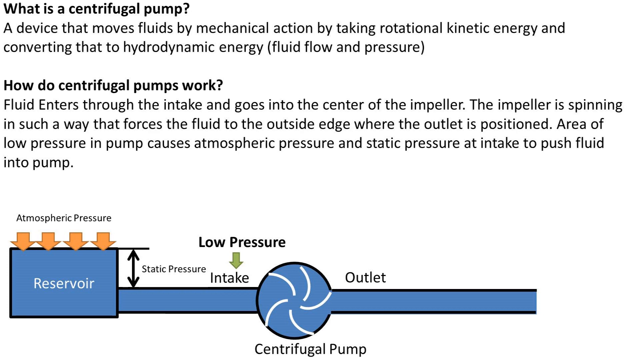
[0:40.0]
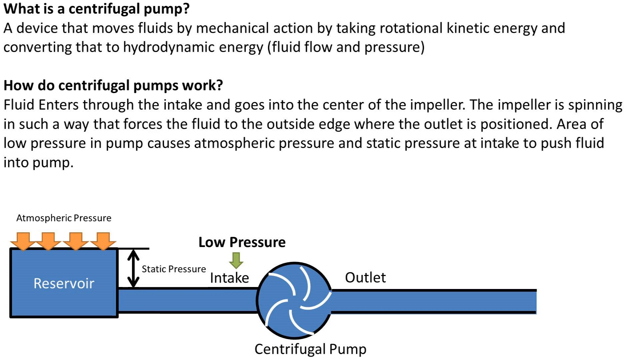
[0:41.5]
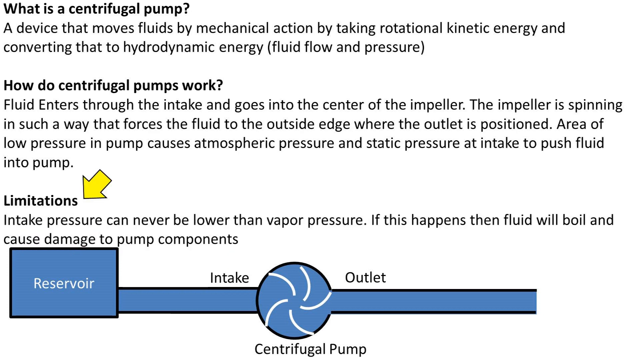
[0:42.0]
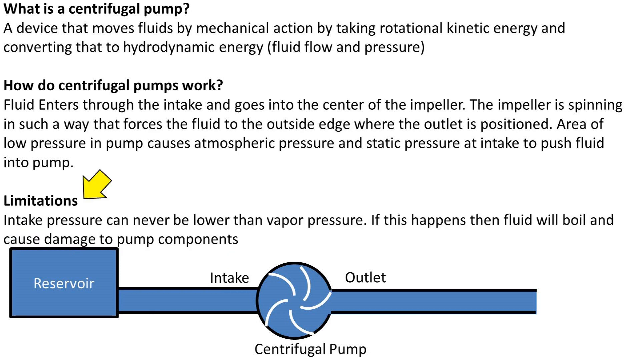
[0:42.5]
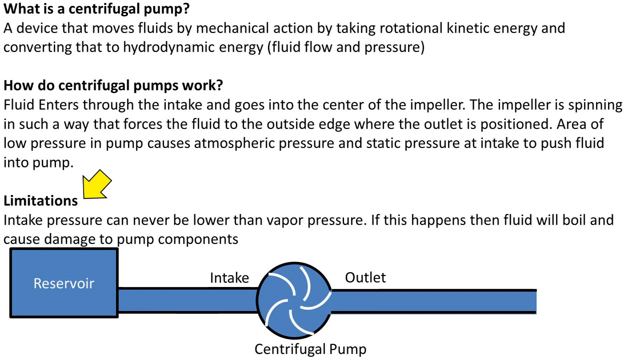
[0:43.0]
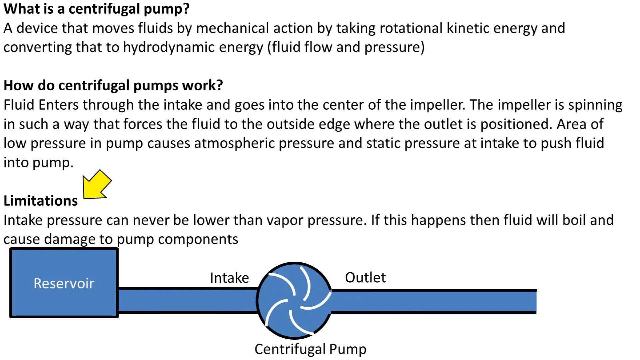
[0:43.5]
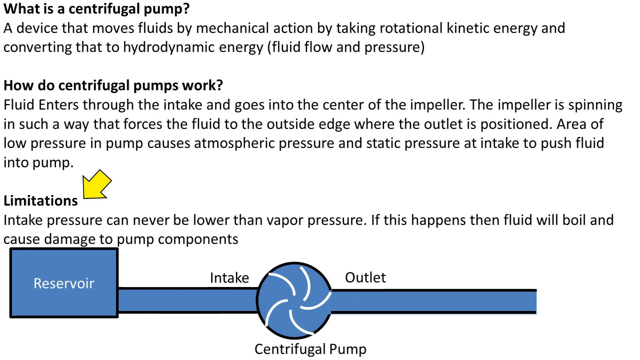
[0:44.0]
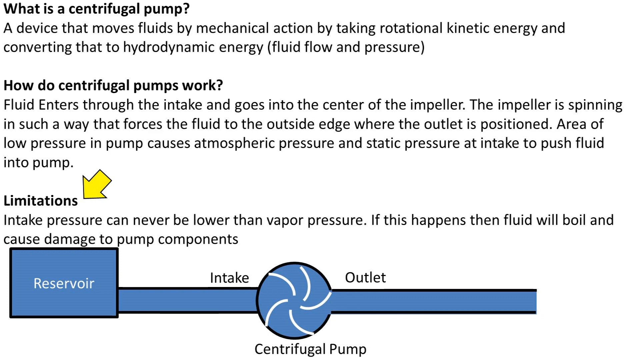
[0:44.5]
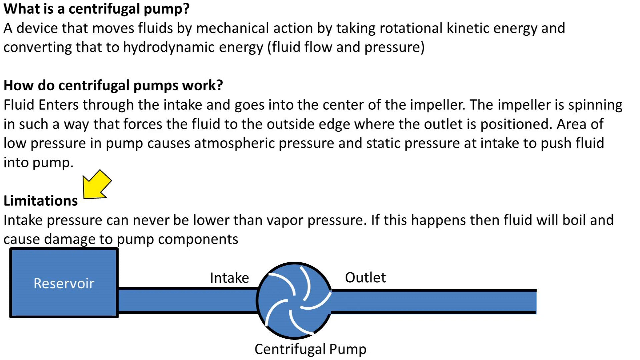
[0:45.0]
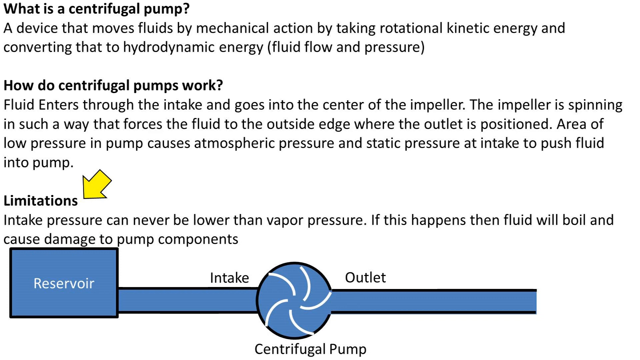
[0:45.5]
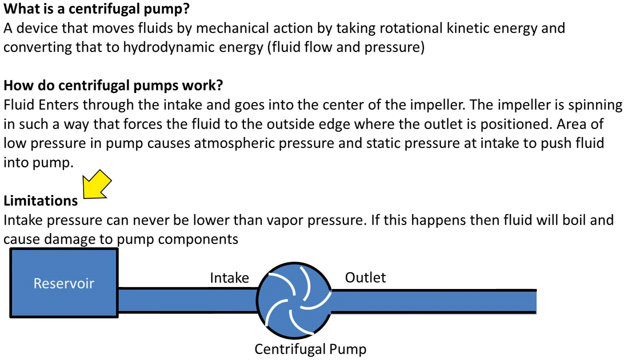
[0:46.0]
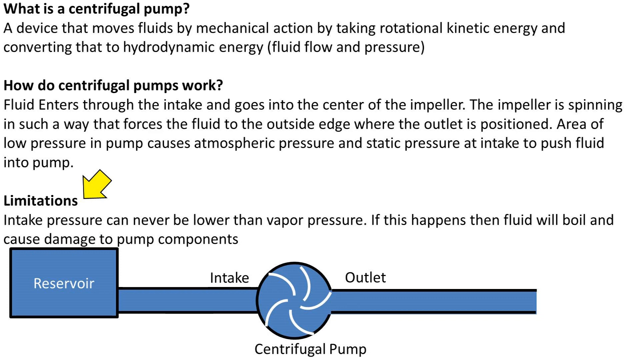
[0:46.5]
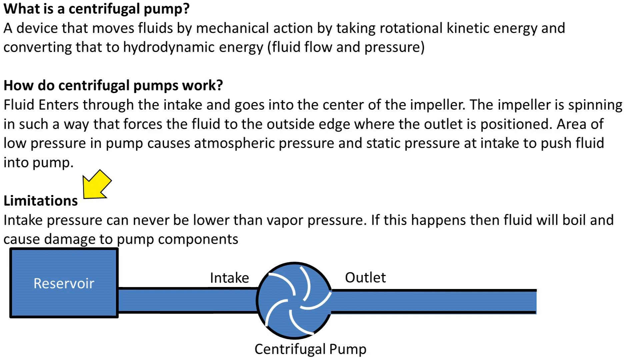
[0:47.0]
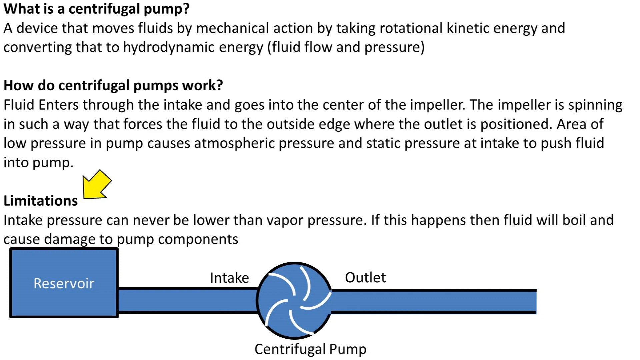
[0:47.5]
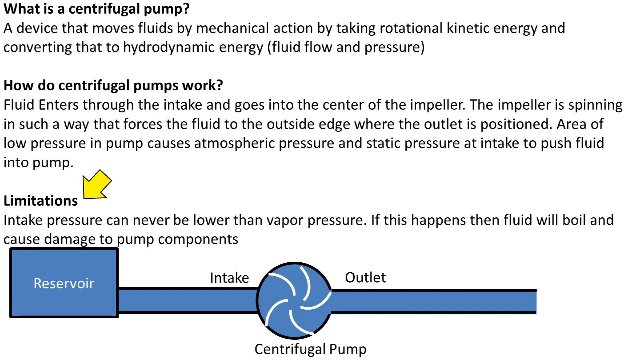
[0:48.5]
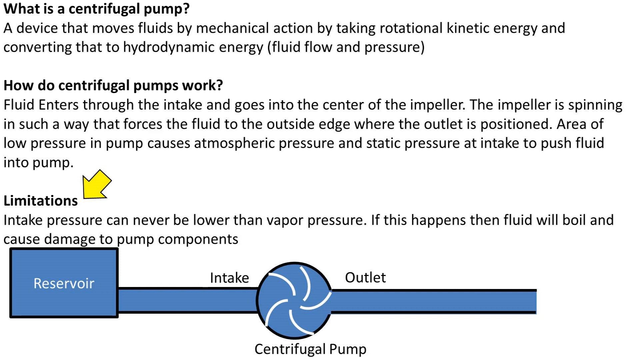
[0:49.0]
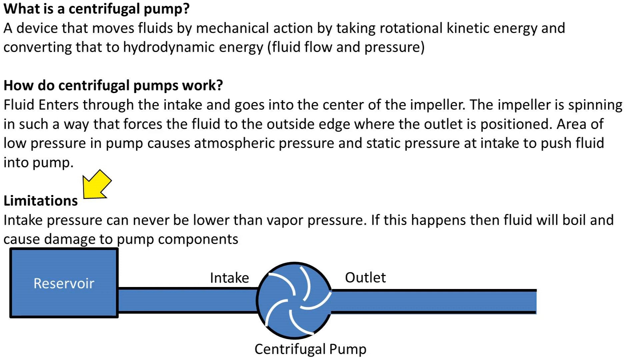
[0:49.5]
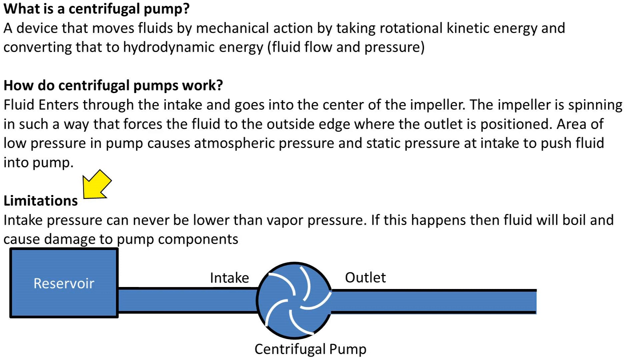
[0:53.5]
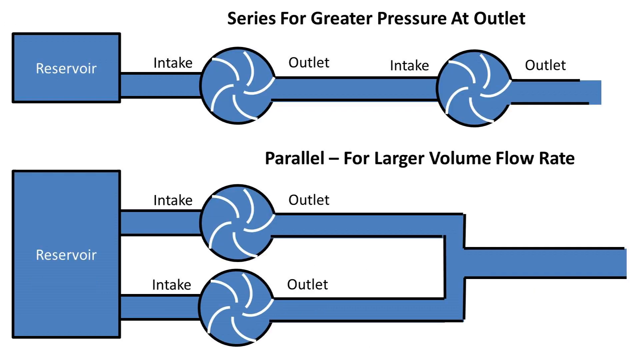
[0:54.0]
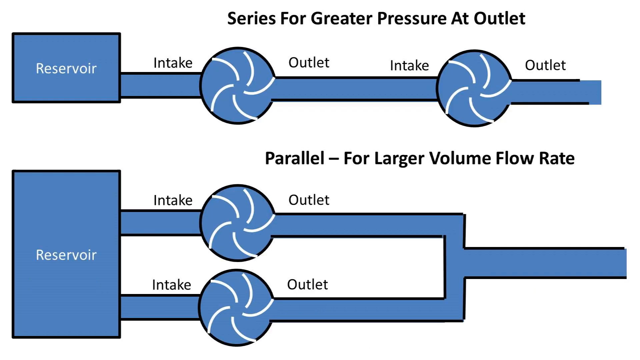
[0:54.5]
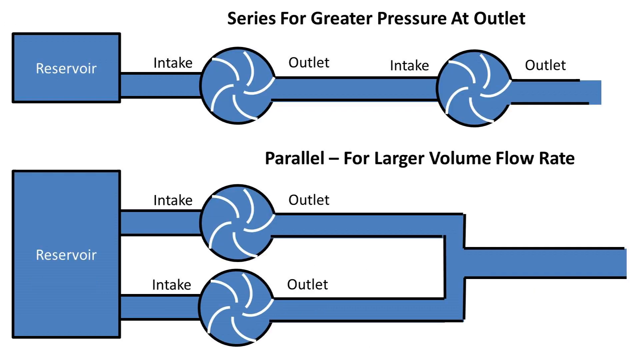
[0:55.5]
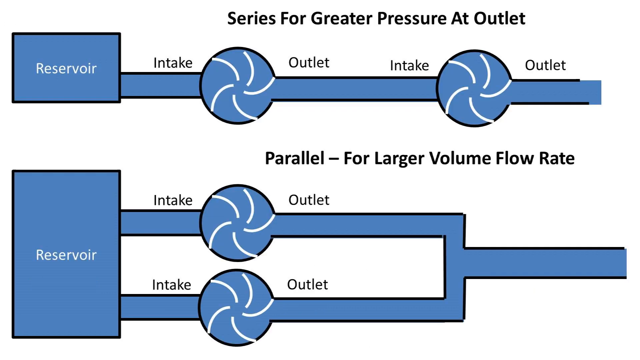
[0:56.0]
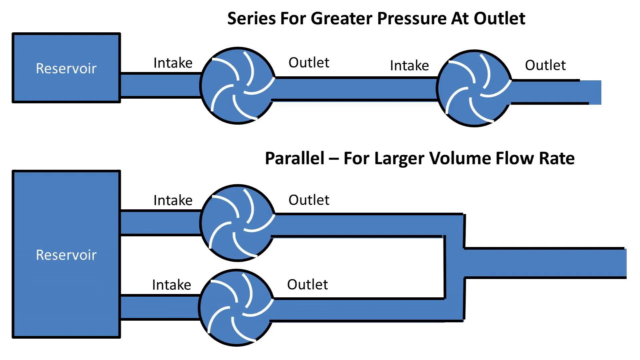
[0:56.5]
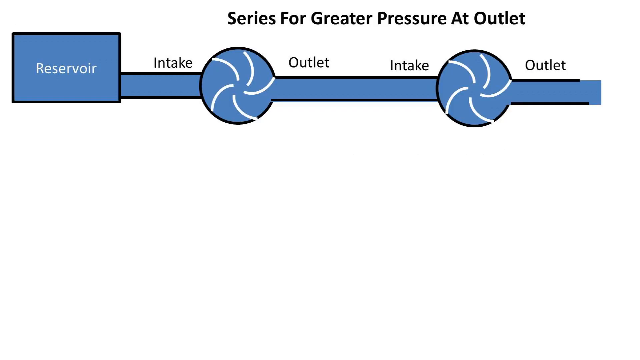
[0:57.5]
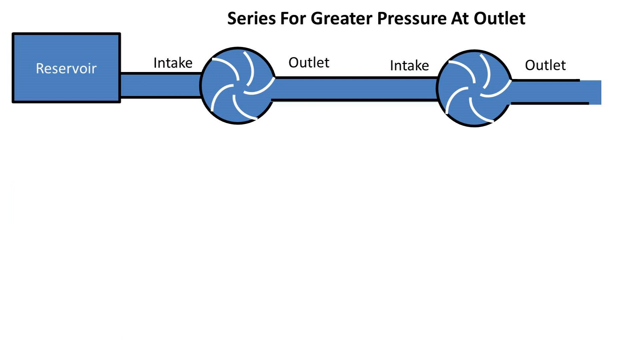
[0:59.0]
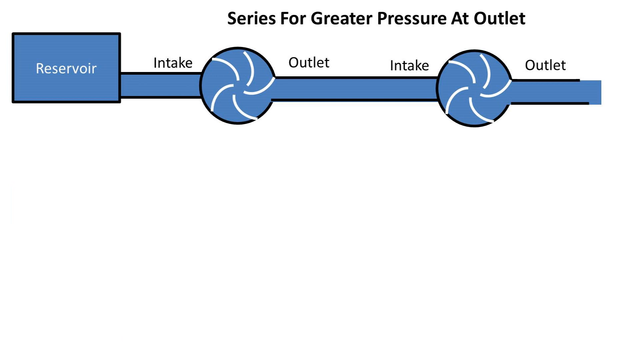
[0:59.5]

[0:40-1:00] The diagram shows the reservoir and fluid going quickly from the intake to the outlet. Limitations of the centrifugal pump process are then shown, including that intake pressure cannot be lower than vapor pressure. Next, a picture shows the series arrangement for more pressure at the outlet, along with how to get a larger volume flow rate, with a reservoir box and different diagrams for each process.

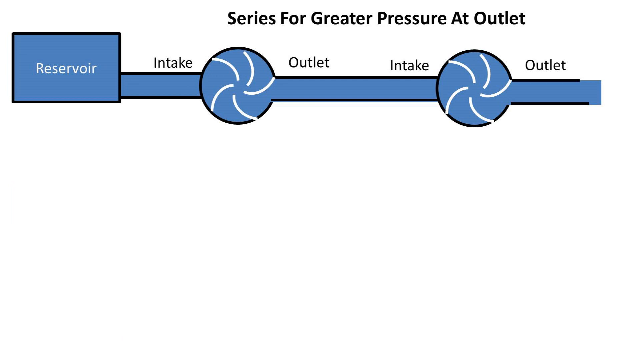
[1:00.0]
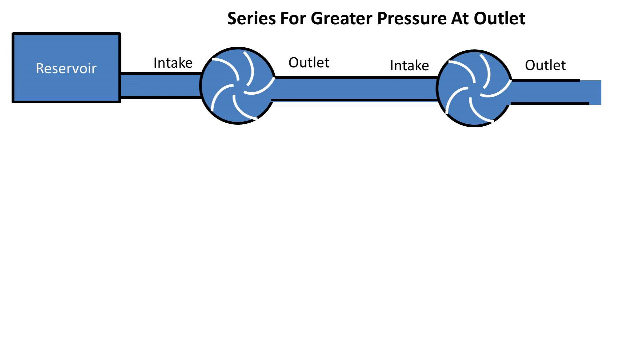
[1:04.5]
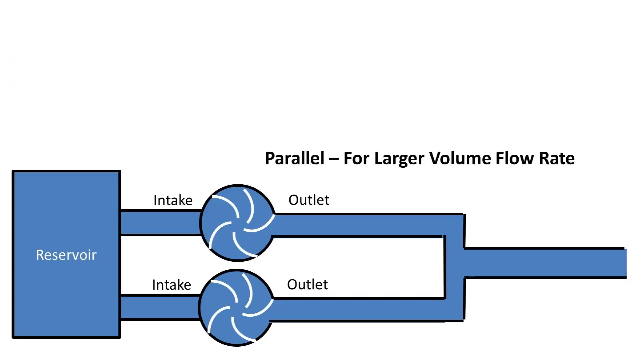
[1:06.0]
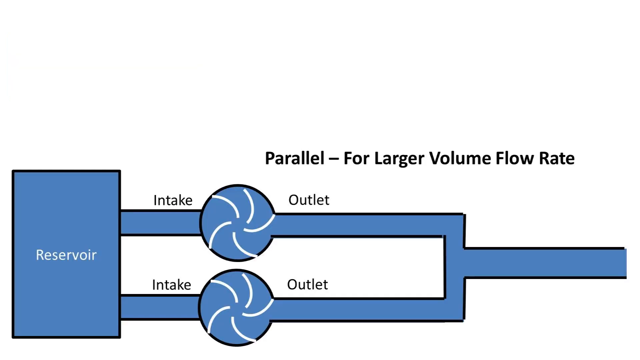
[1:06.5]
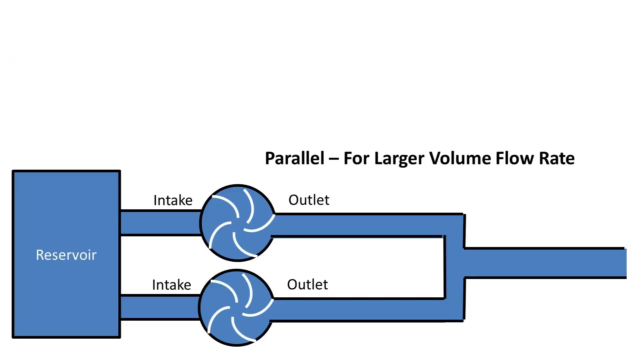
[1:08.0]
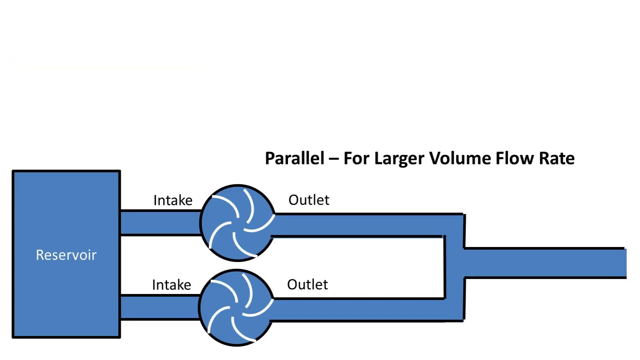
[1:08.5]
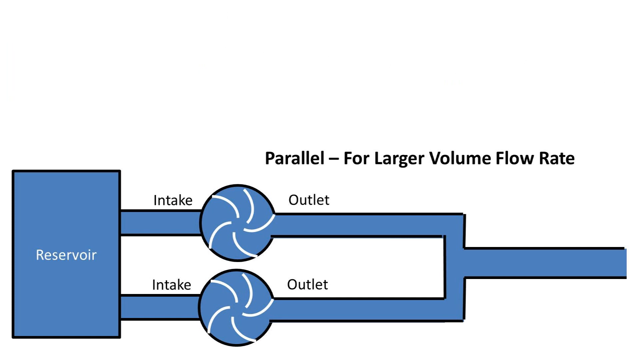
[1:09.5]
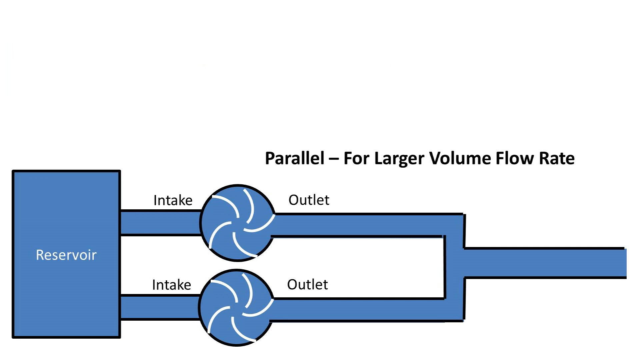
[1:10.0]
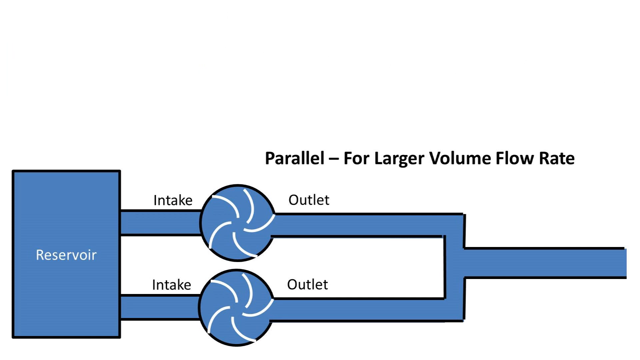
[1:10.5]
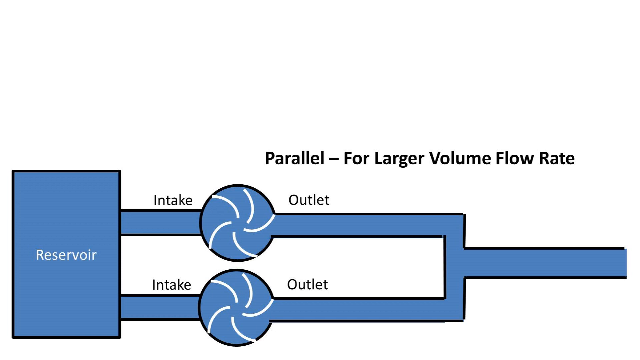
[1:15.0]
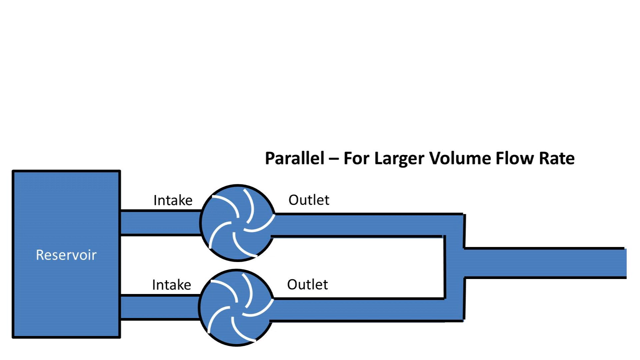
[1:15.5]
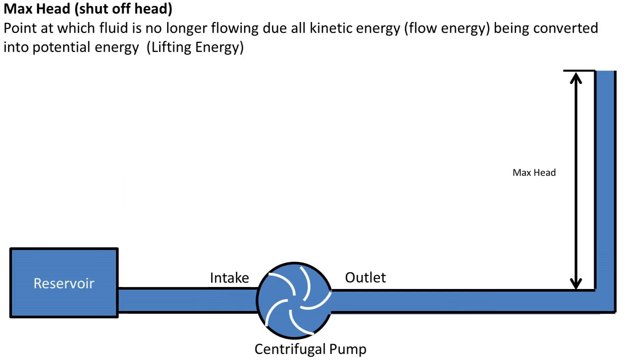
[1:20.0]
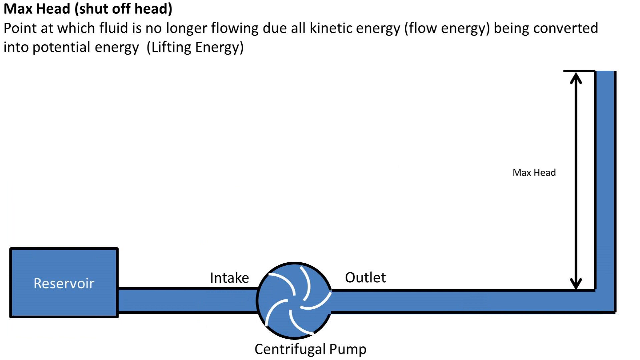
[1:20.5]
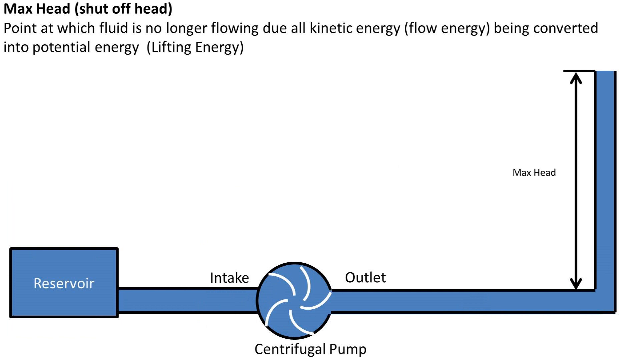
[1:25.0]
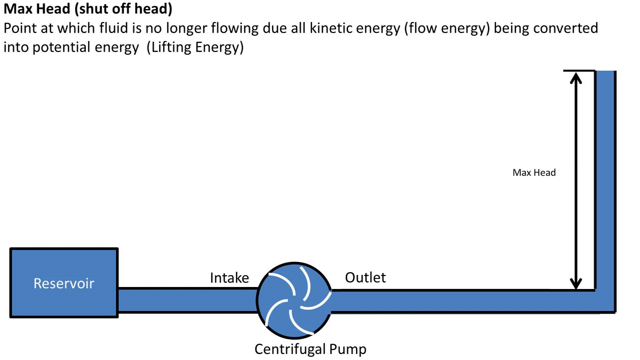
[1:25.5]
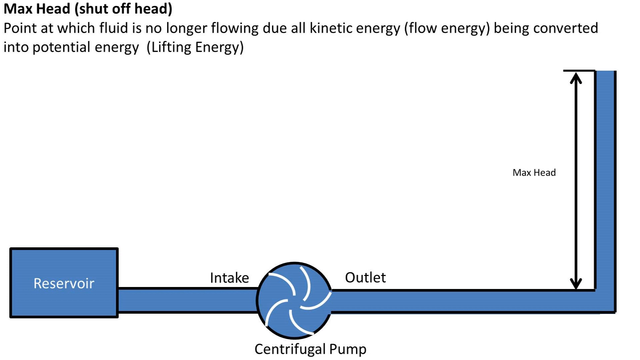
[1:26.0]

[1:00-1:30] A picture shows the reservoir as a square blue box. Next to it is a rectangular intake box and a blue ball representing a fan-like movement leading to the outlet, its lines curled and bent like a fan. Another, longer rectangle shows the outlet and another intake part, and another fan-like structure or ball connects it to the outlet, a rectangular shape that runs to the end of the frame. The next series is a parallel arrangement for a larger volume flow rate: a reservoir in a taller, larger rectangle and a rectangular part that connects the entire outlet together. The outer part represents the intake and outlet parts, while the inner part represents the non-moving parts. Each intake and outlet is separated by a fan-like structure, until the blue line reaches the end of the page, representing the outflow.